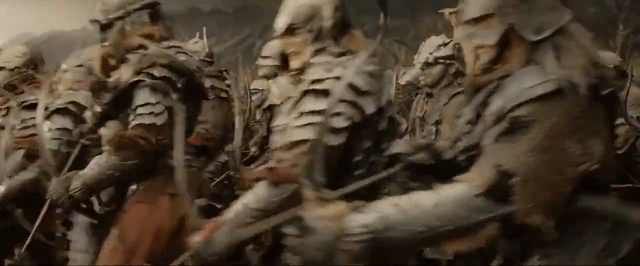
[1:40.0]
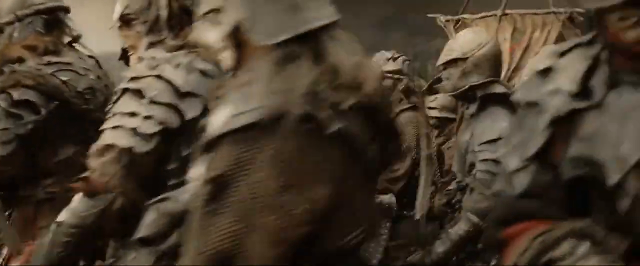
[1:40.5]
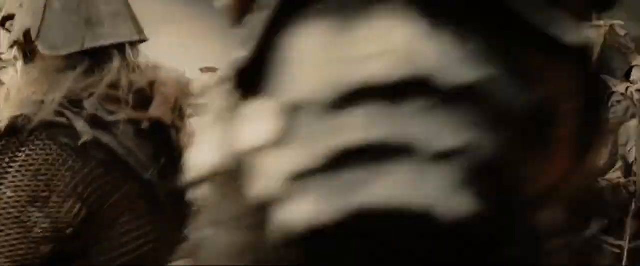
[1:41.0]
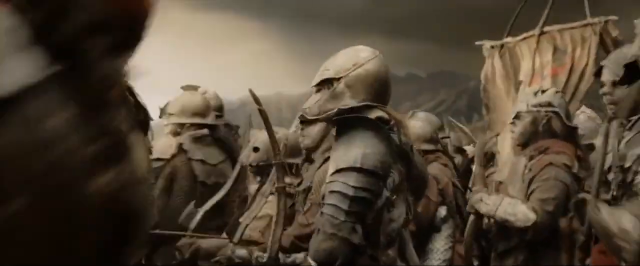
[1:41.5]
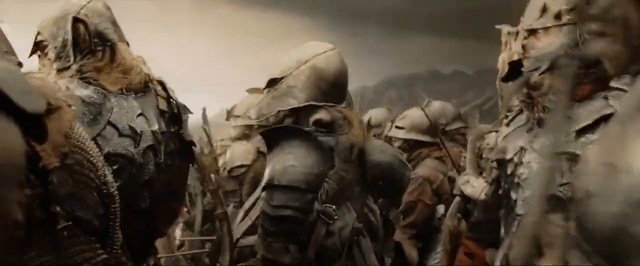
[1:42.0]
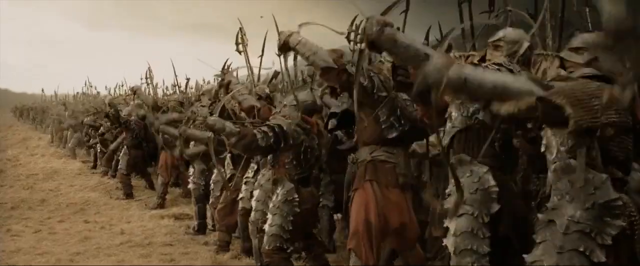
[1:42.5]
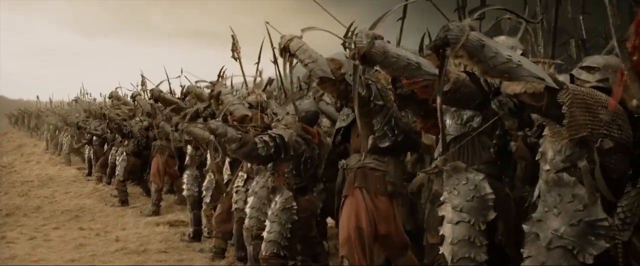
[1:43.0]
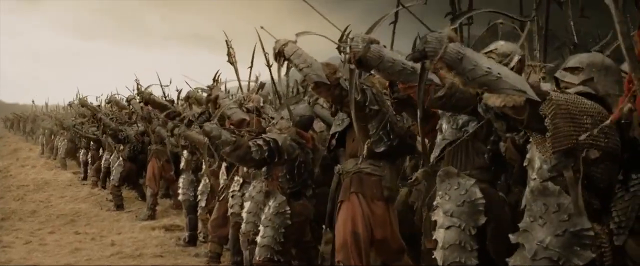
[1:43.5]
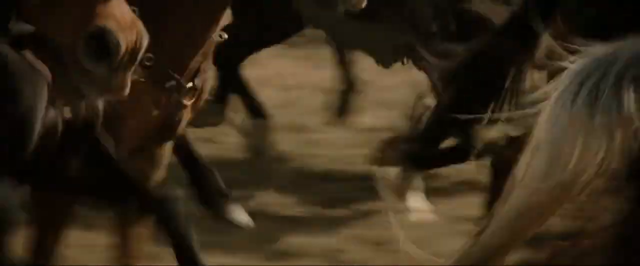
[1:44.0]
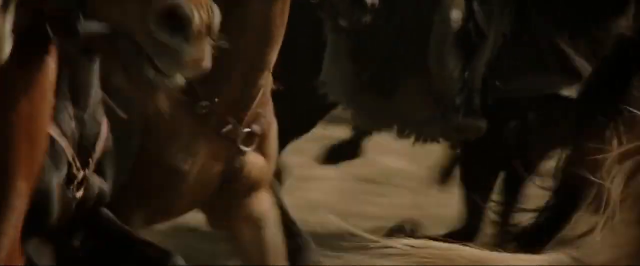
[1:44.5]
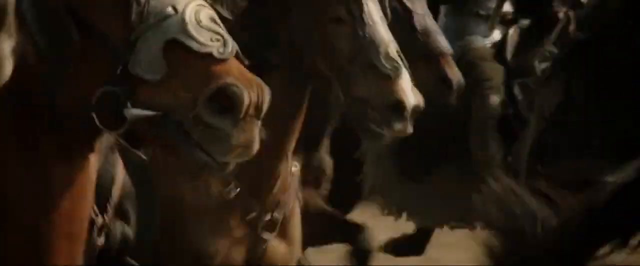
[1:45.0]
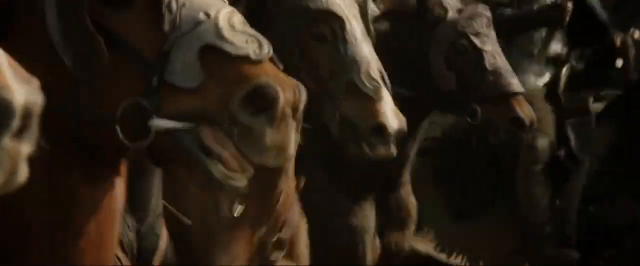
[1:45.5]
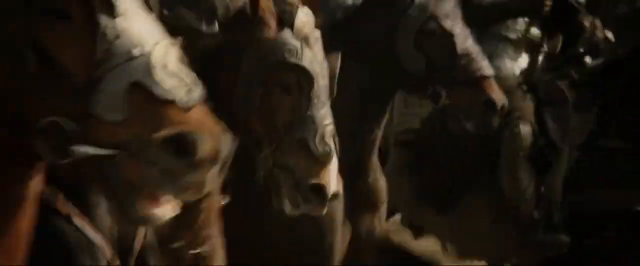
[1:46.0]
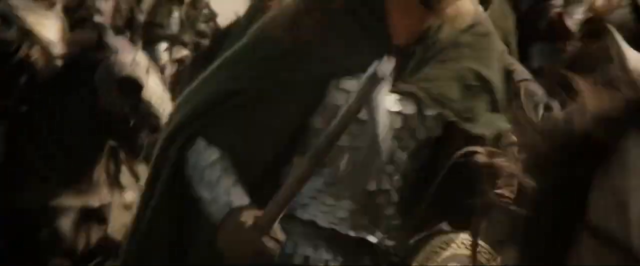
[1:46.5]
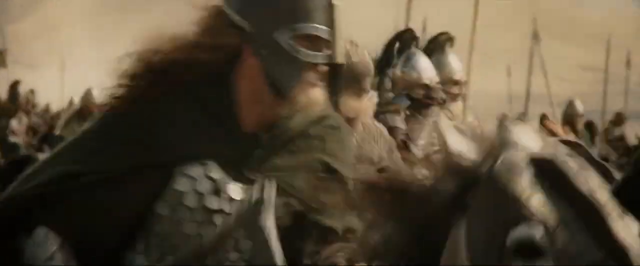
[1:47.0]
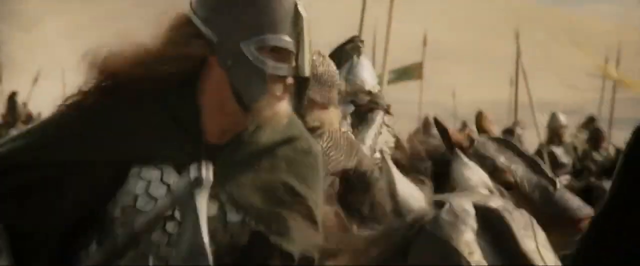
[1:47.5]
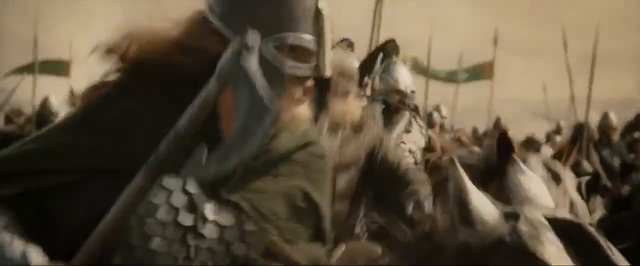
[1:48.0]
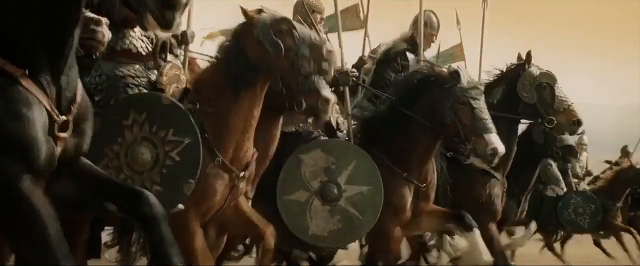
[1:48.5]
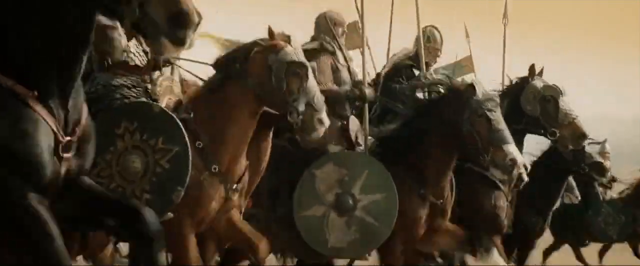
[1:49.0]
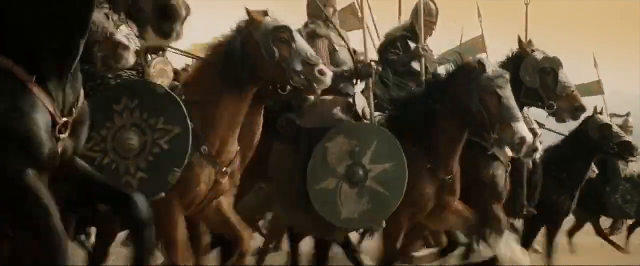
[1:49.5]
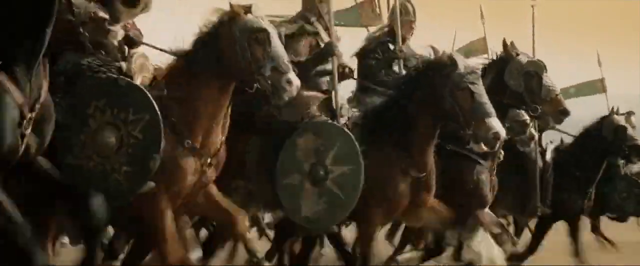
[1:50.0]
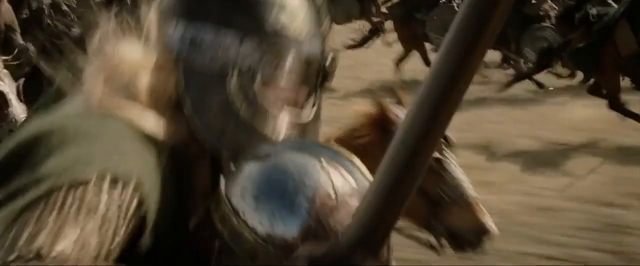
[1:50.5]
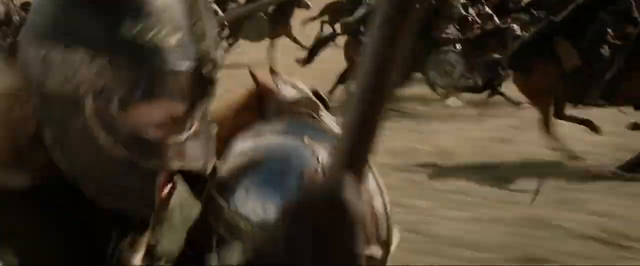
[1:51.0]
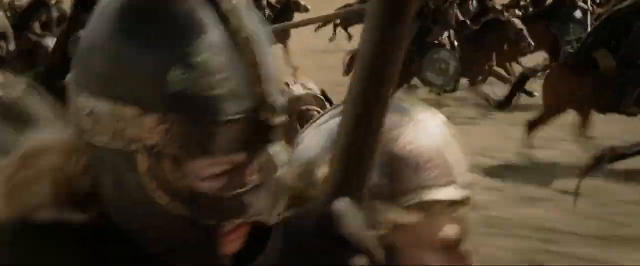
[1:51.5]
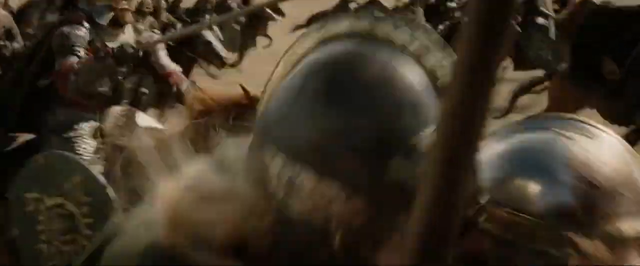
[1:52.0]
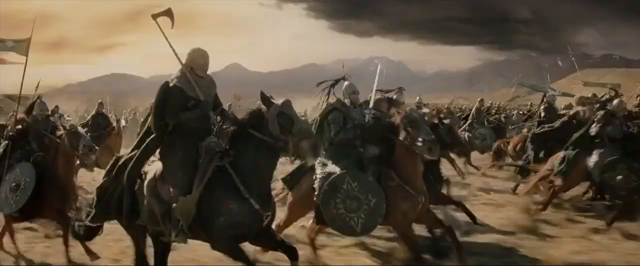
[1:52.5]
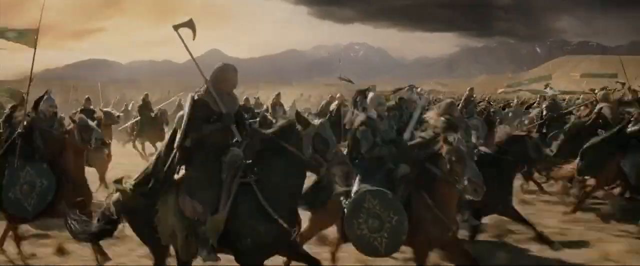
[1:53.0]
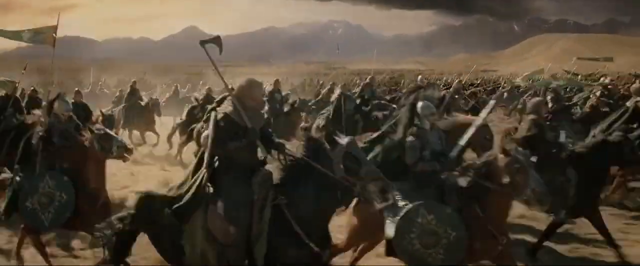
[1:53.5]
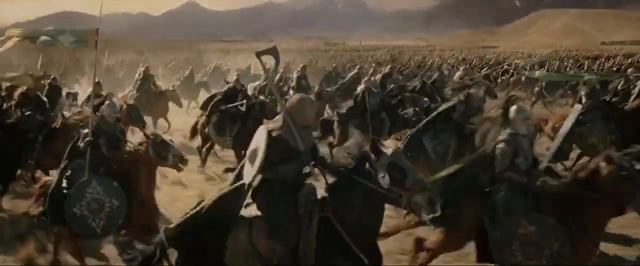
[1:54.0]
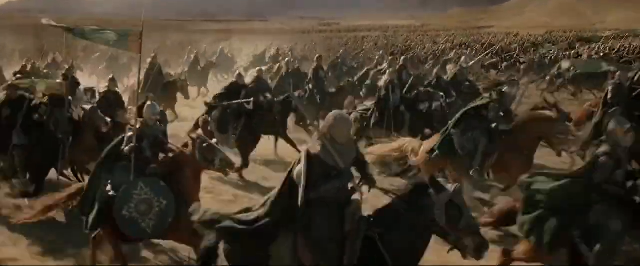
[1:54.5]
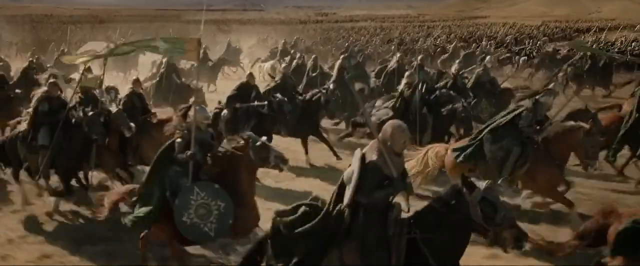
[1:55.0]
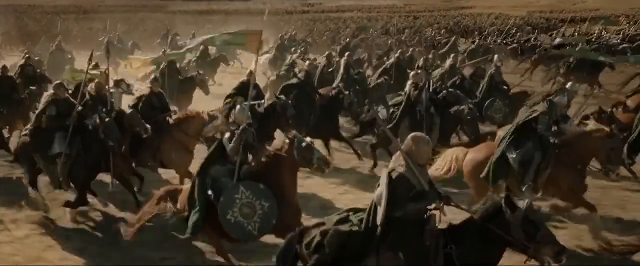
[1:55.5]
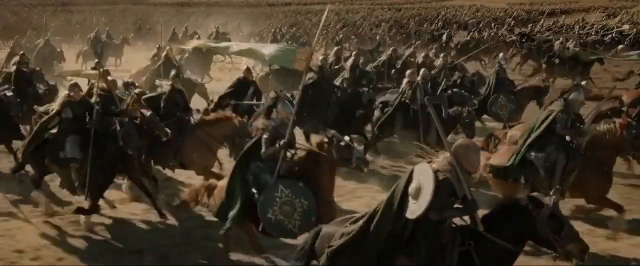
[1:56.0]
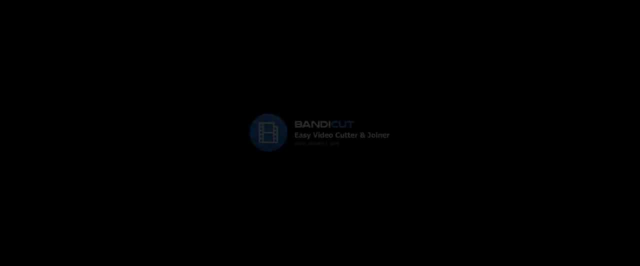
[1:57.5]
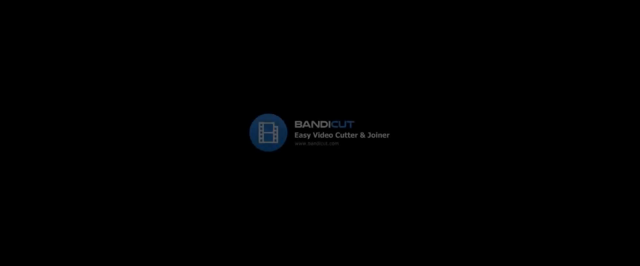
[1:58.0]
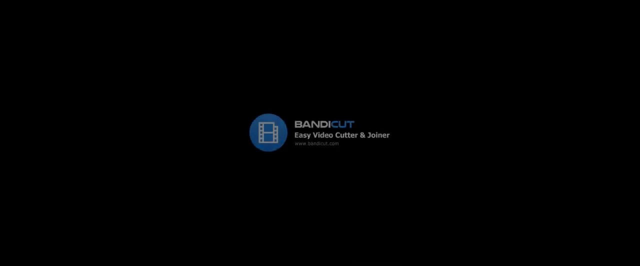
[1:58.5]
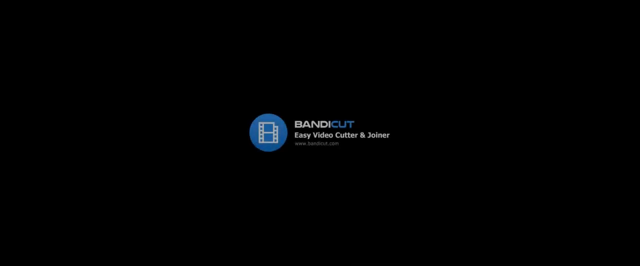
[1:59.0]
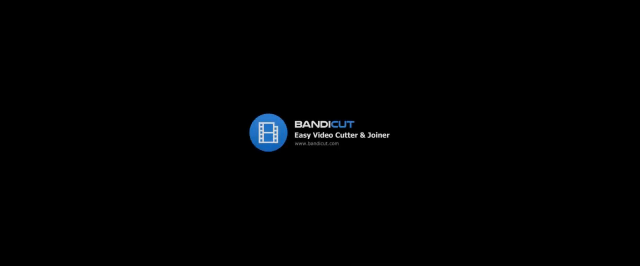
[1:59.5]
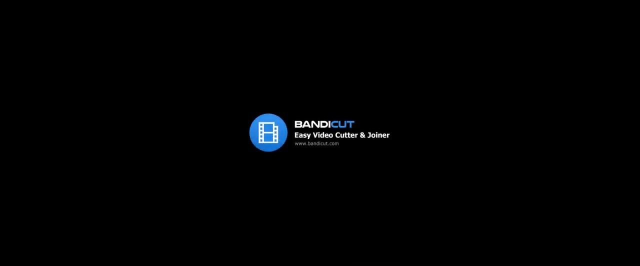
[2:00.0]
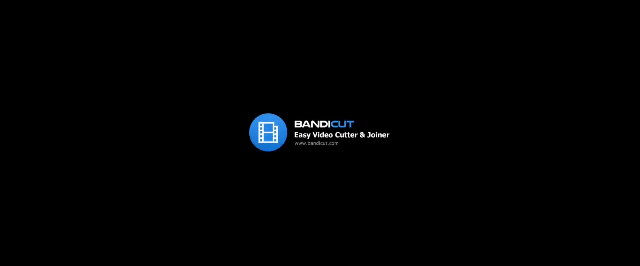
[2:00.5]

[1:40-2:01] The footage appears to be from a Lord of the Rings film. It opens with a close front shot of the army of orcs, armored and readying their bows, slowly charging forward. A front long shot of the orc army shows the bowmen as the front line, raising their bows to the sky and readying their arrows. It cuts to the other army, with a close shot of the horses charging forward. A close shot shows a man on a horse charging and brandishing a hatchet, moving slowly from his torso to his face, with more of the army visible behind him. A front shot of the army focuses on the horses, with many of the men brandishing spears and shields as they charge forward. It cuts to a fully armored woman brandishing a spear and screaming. Finally, a wide shot shows the army of men on horses charging forward, brandishing weapons, with a dark and cloudy sky partially visible and mountains in the background.